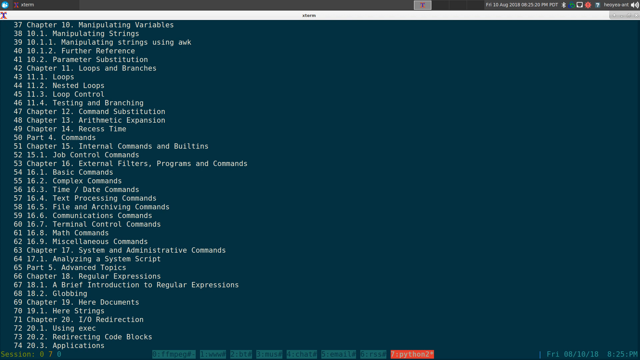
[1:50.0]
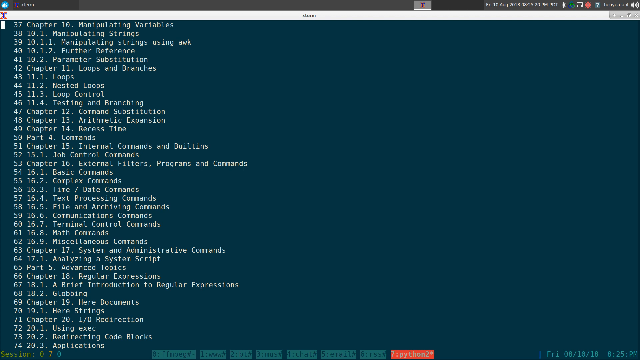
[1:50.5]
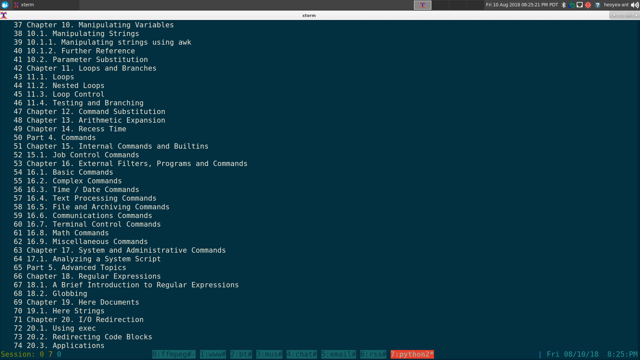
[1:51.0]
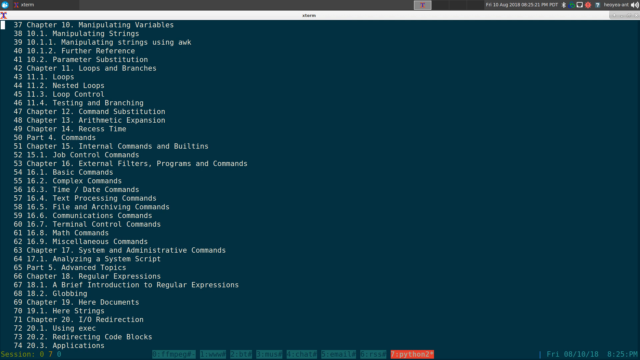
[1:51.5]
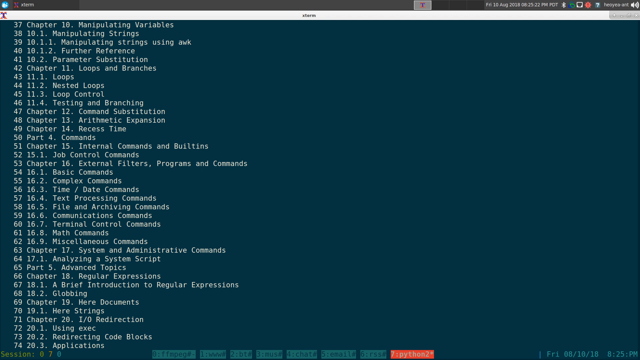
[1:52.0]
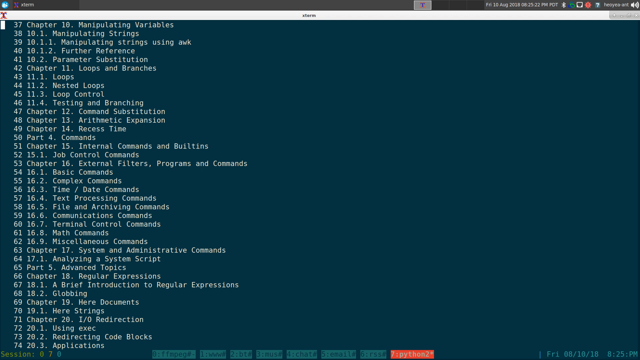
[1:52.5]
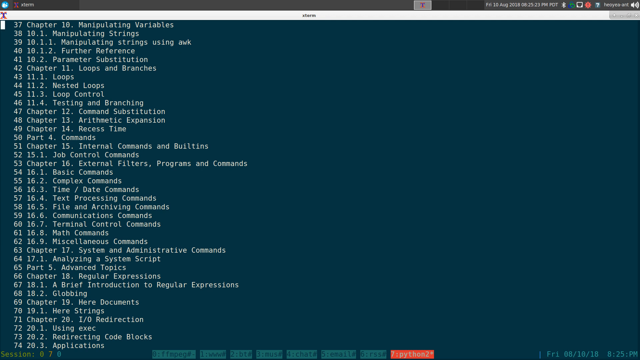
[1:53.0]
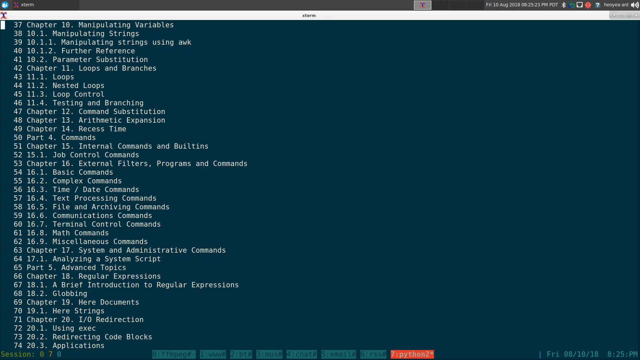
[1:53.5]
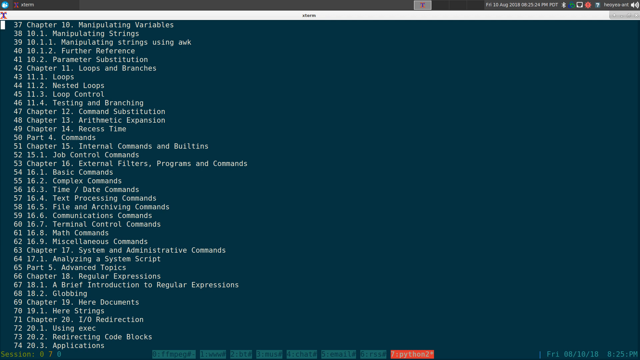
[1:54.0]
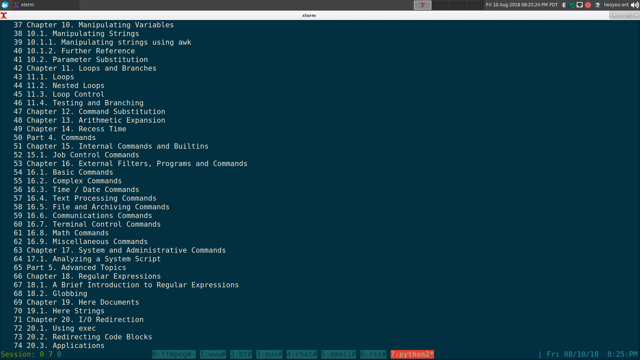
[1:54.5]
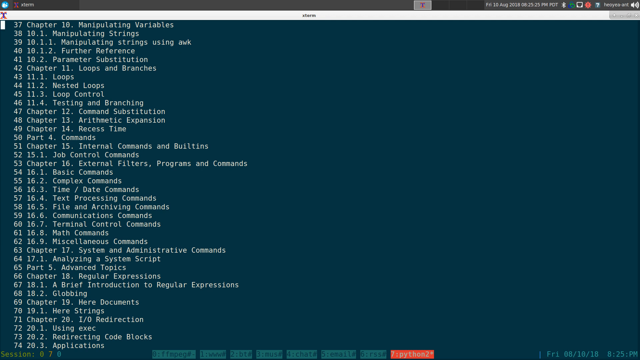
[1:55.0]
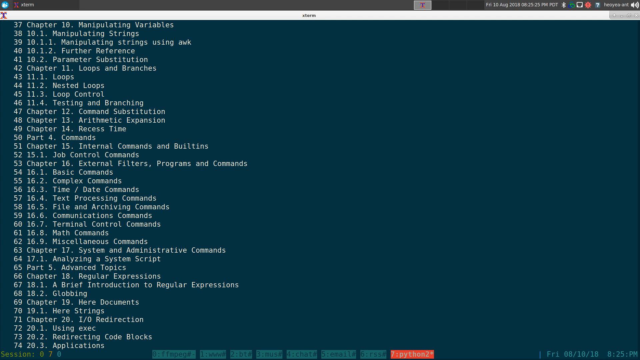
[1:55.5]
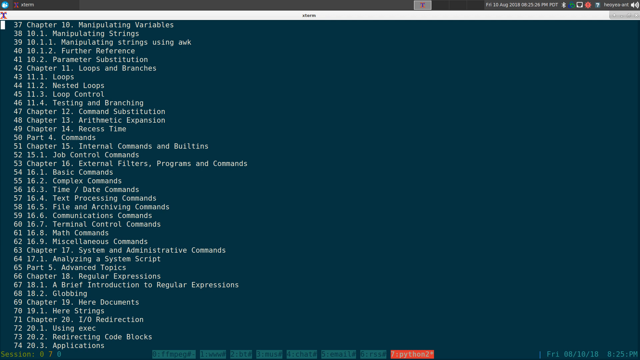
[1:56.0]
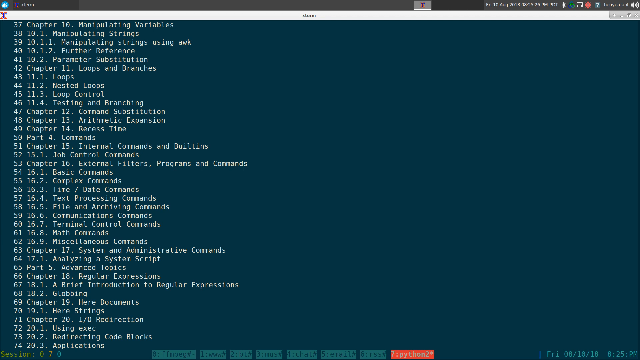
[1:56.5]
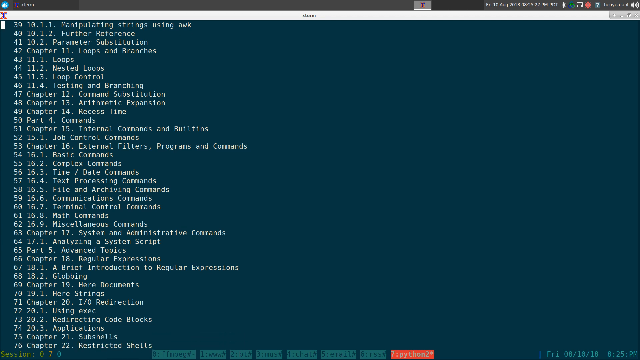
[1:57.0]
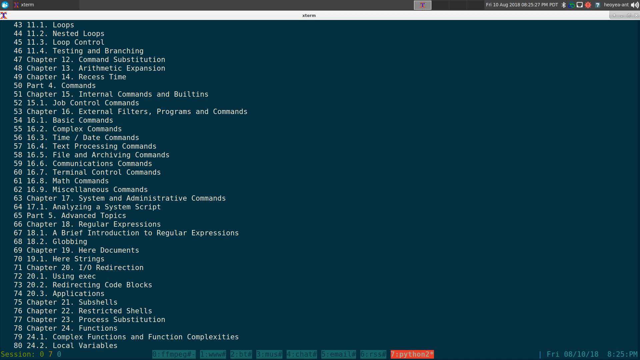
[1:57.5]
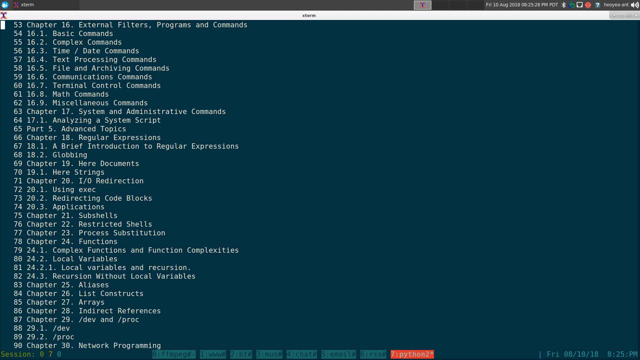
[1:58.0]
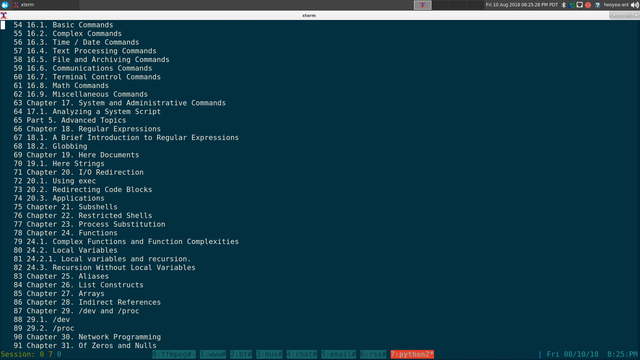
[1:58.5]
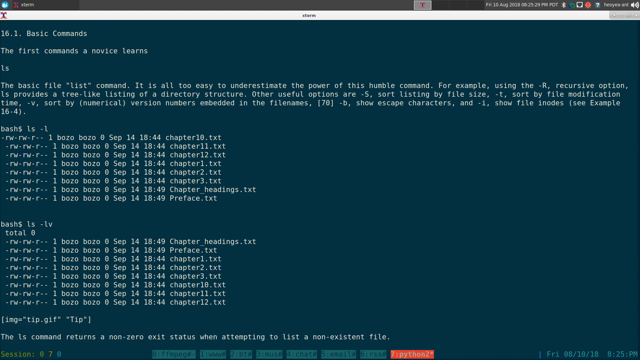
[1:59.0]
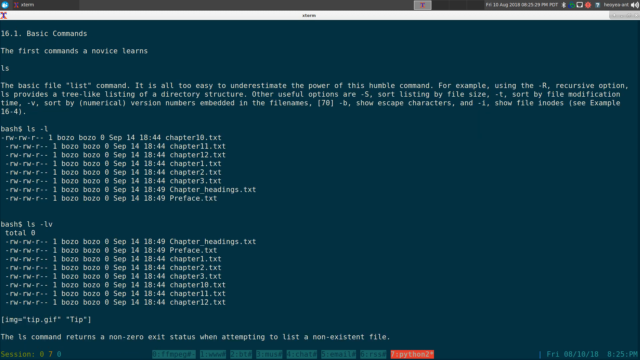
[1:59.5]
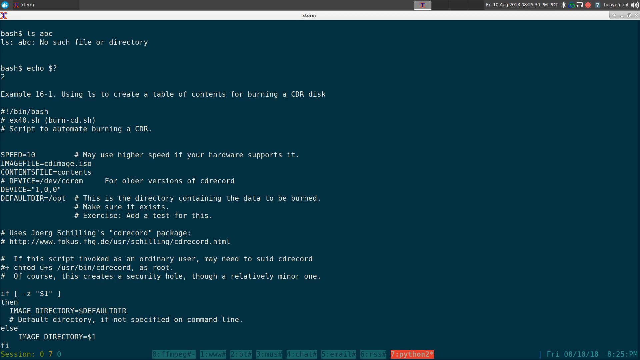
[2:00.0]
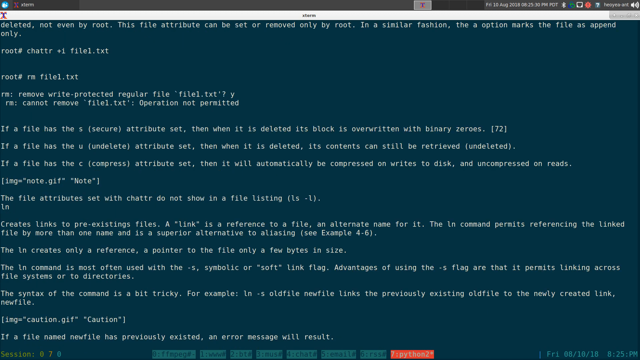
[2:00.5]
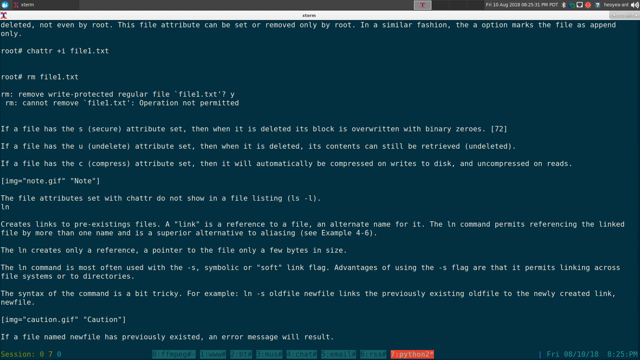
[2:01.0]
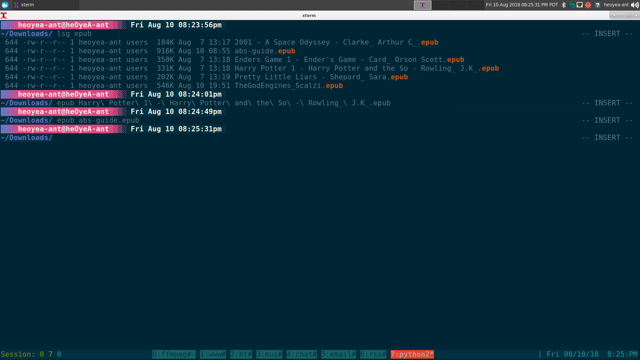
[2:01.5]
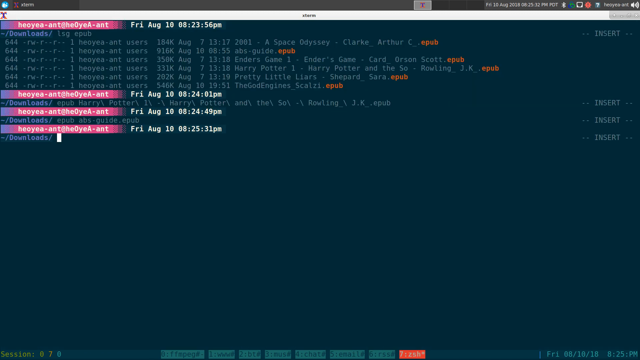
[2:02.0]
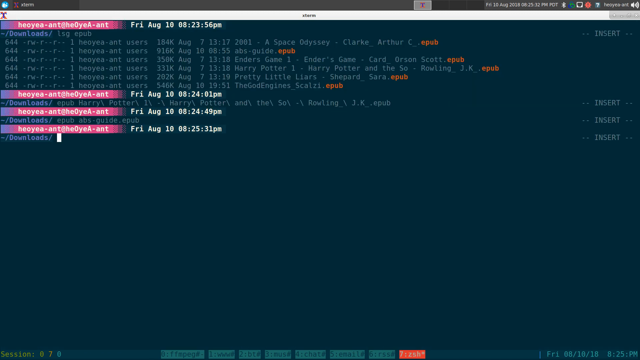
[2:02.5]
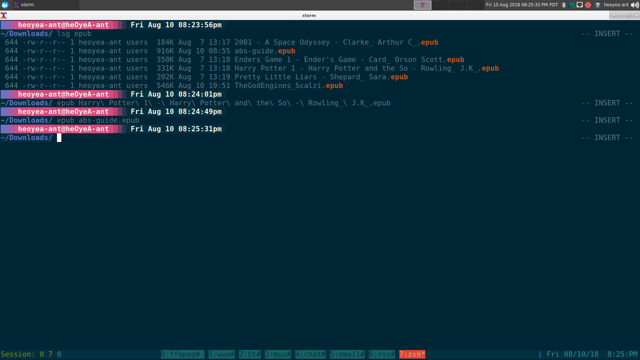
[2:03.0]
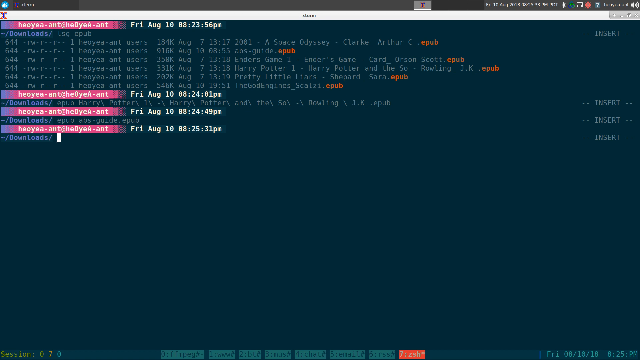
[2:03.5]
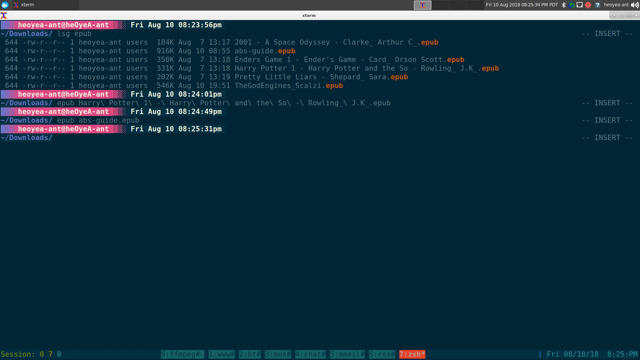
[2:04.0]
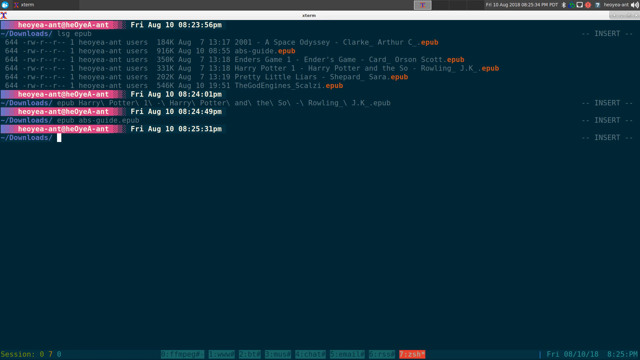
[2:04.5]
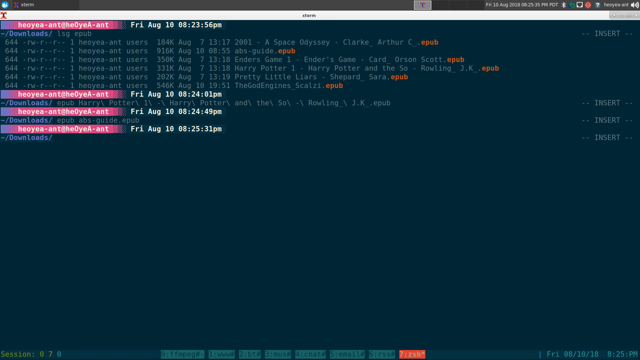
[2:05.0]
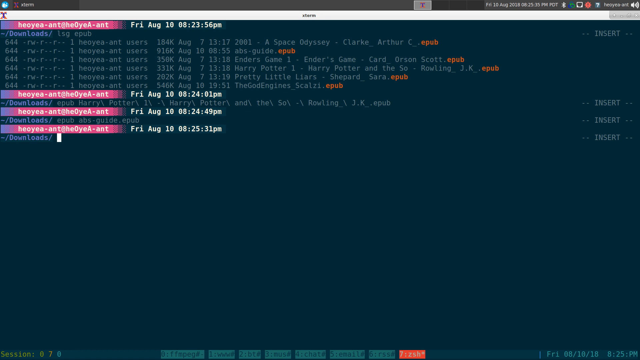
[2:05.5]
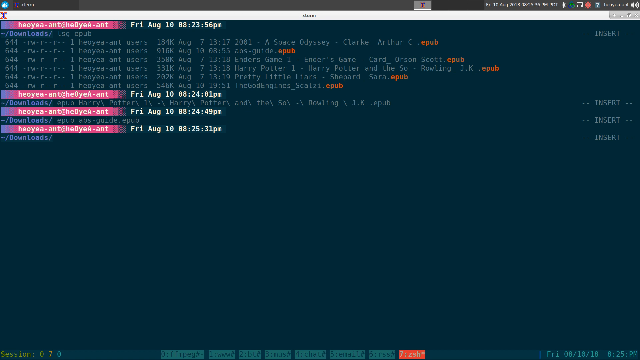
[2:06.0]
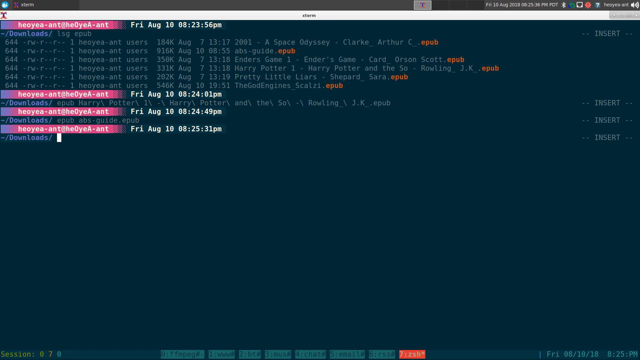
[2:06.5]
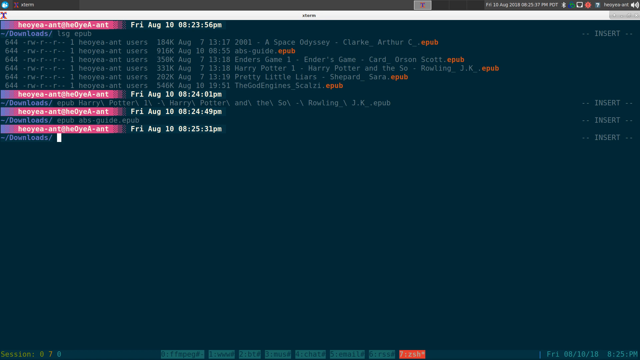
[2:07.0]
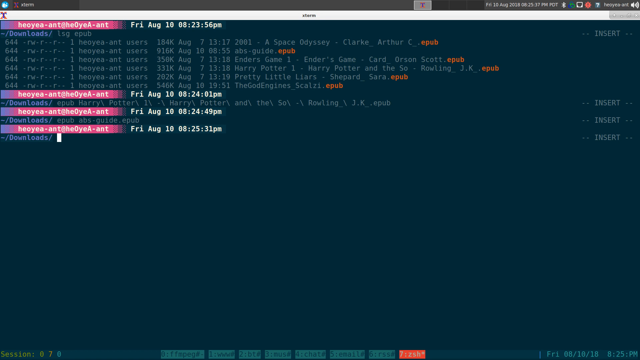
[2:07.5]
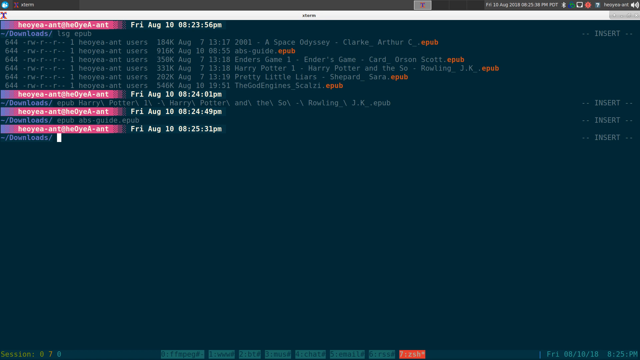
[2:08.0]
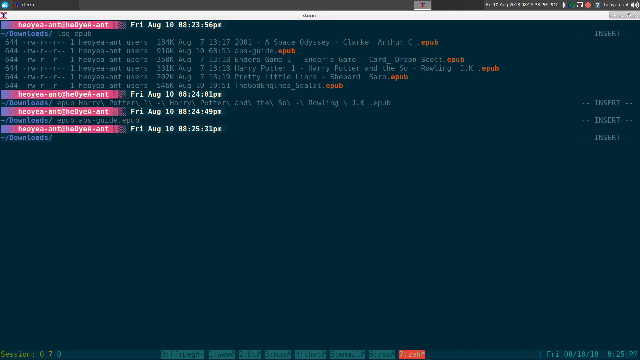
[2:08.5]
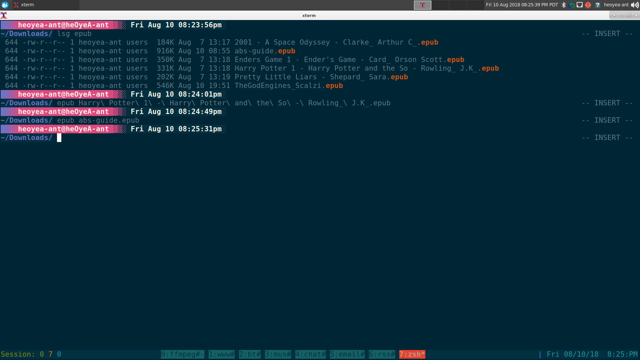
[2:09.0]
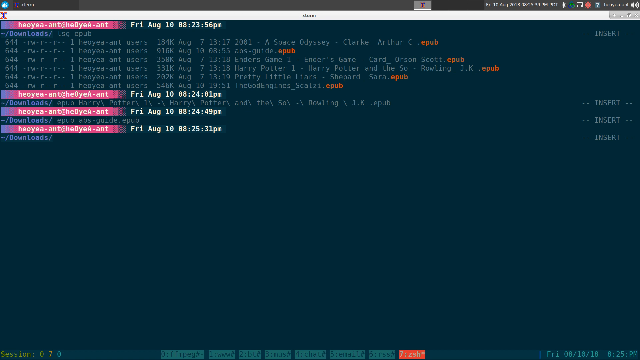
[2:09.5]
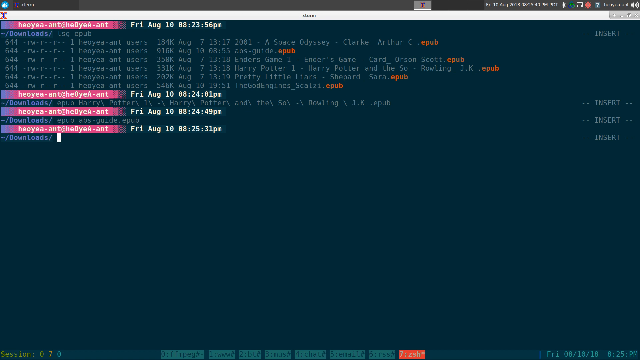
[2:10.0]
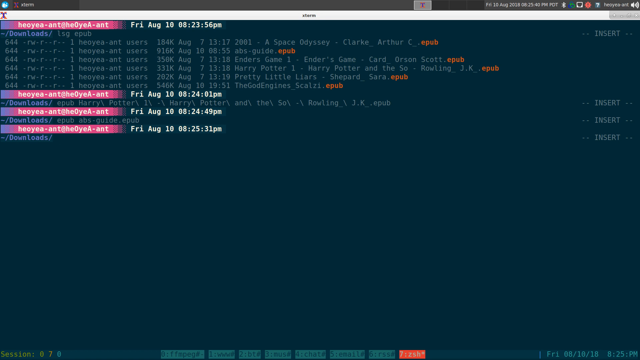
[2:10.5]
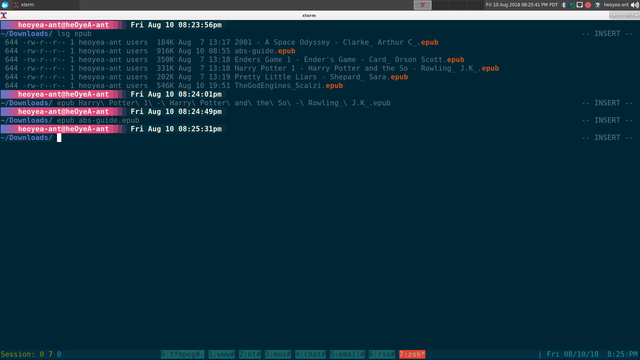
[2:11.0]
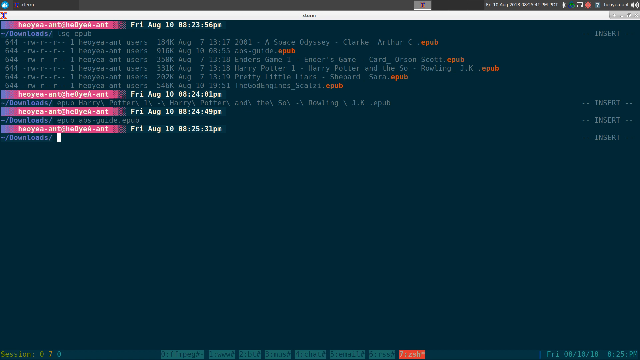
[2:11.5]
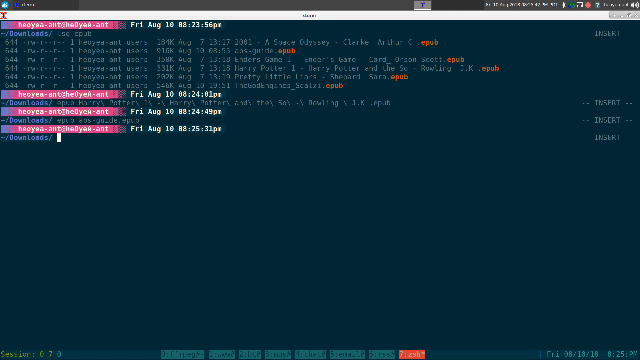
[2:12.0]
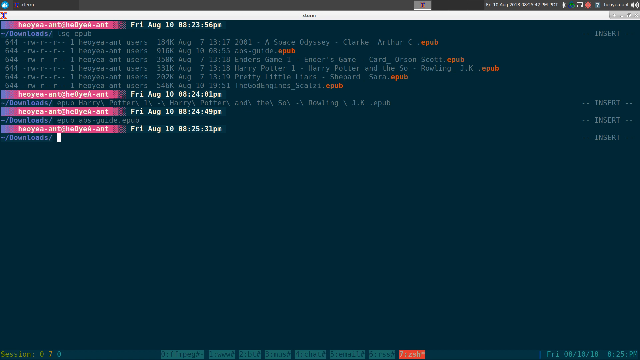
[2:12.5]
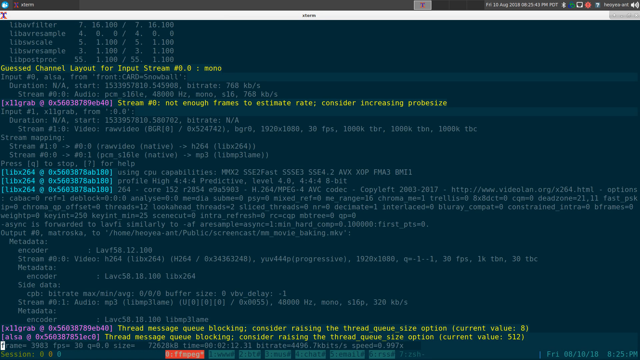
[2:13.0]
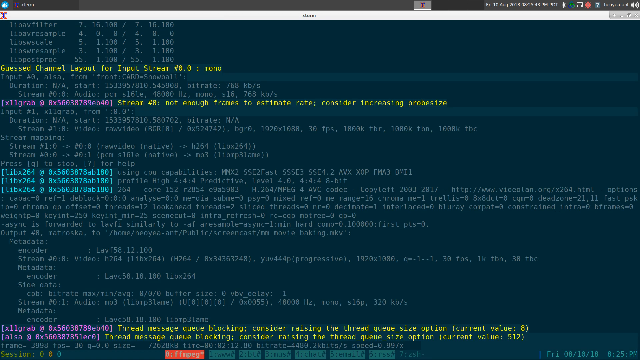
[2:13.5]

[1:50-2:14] The cursor blinks at line 37 on chapter 10, then the user continues scrolling and stops at "16.1 basic commands". They open it, quickly scroll through, and then completely exit the book. The prompt returns in the downloads folder, and the cursor after the downloads folder keeps blinking, but no further commands are typed. The time is now 8:25 p.m. The demonstration appears to be a walkthrough of exploring .epub files in the terminal, accessing chapters and sections through the command line. The terminal window is a dark teal color, and each time the username appears it is shown in a gradient from purple to pink.